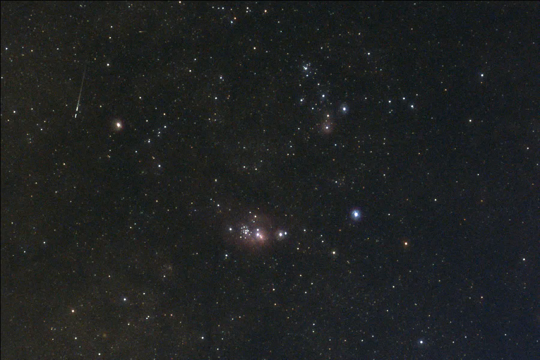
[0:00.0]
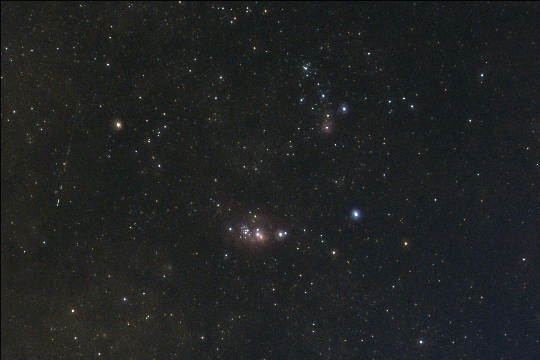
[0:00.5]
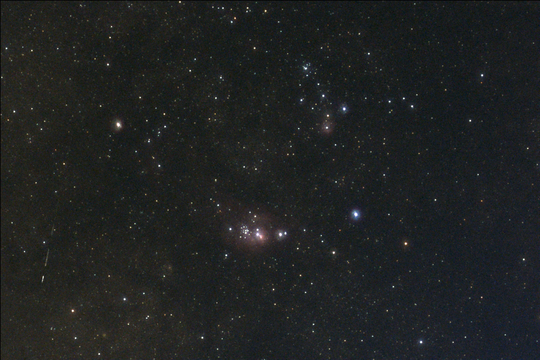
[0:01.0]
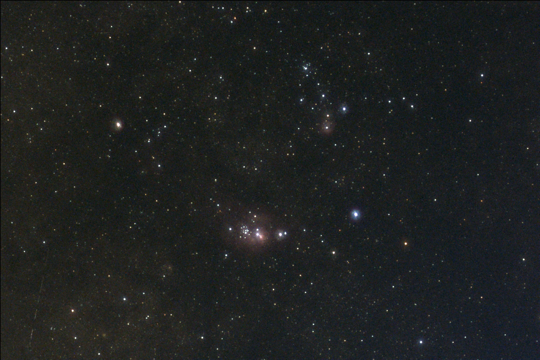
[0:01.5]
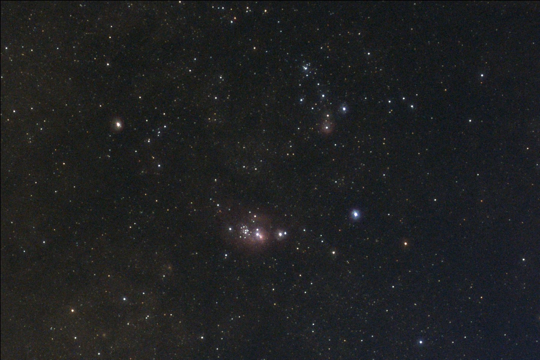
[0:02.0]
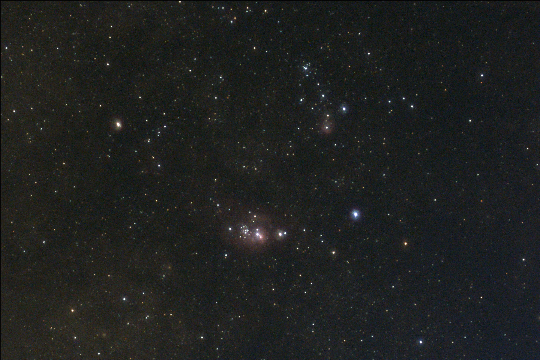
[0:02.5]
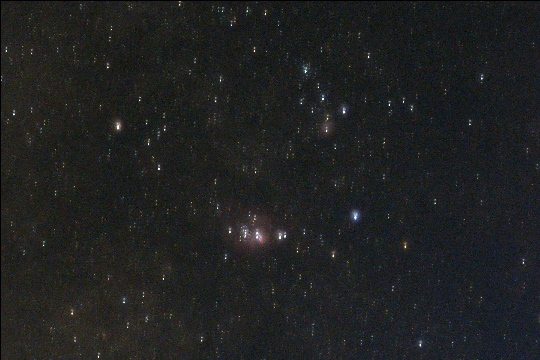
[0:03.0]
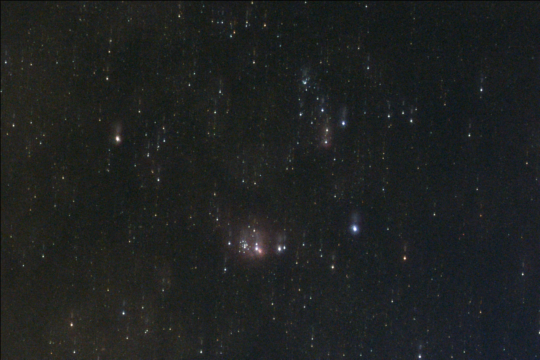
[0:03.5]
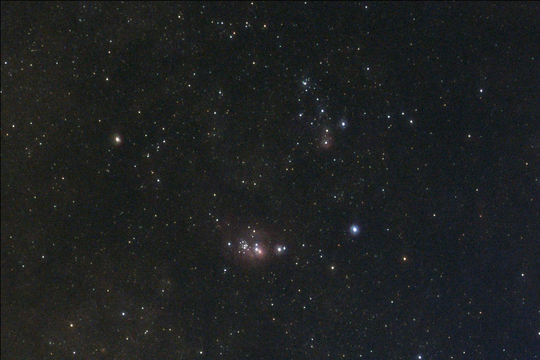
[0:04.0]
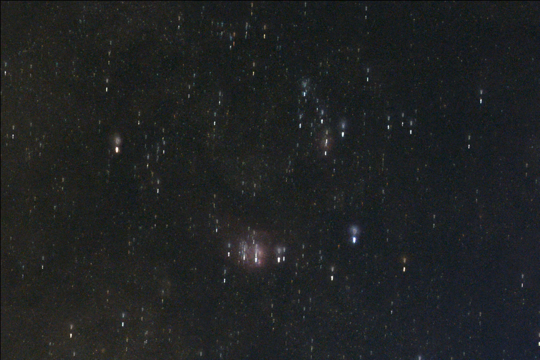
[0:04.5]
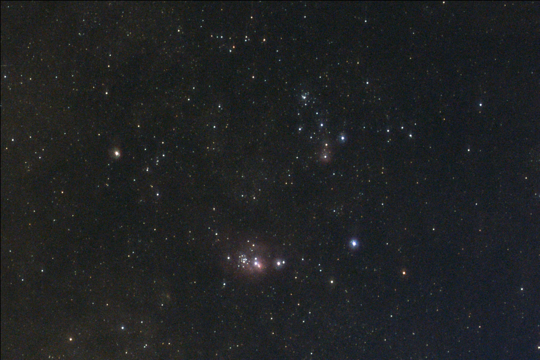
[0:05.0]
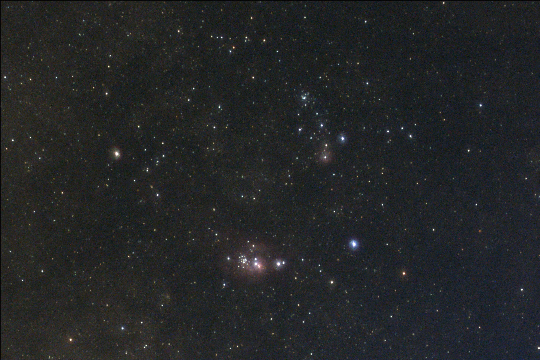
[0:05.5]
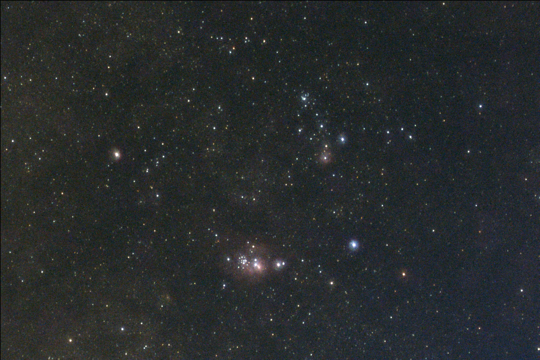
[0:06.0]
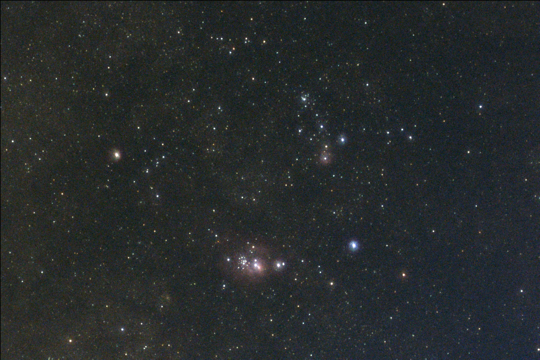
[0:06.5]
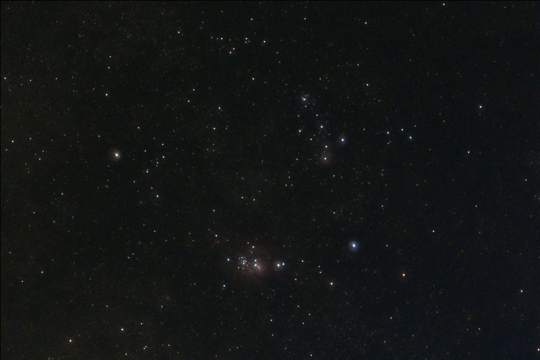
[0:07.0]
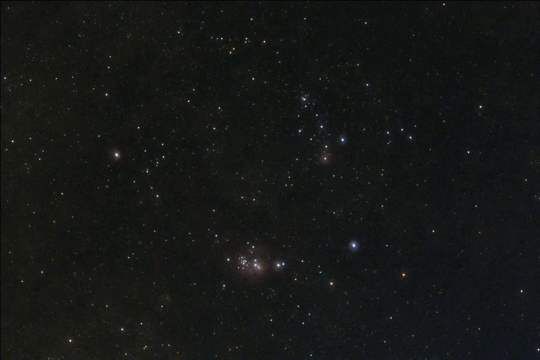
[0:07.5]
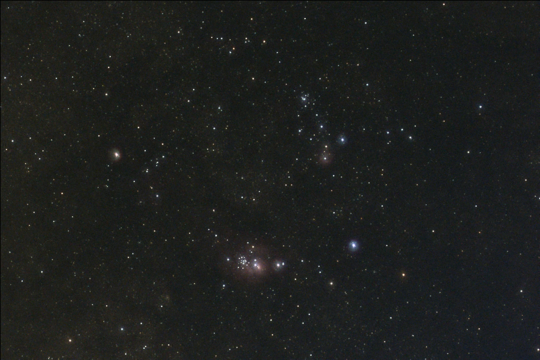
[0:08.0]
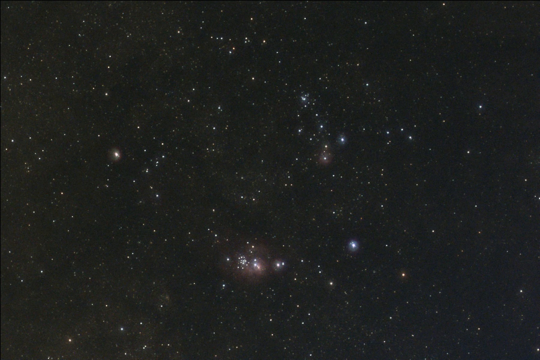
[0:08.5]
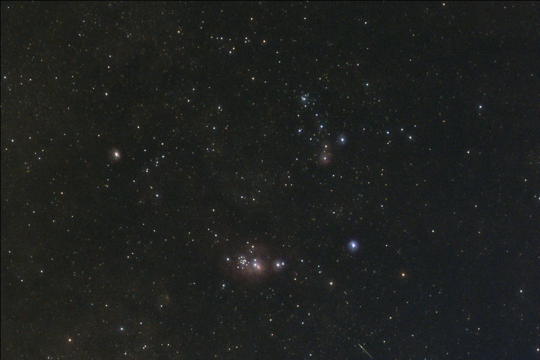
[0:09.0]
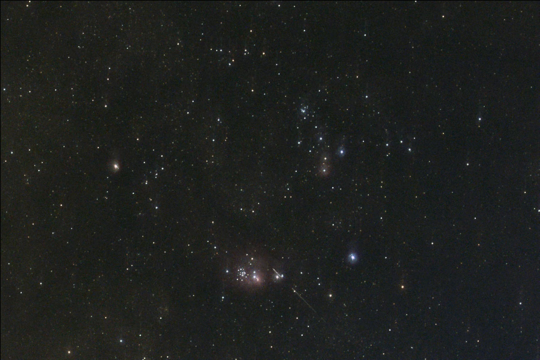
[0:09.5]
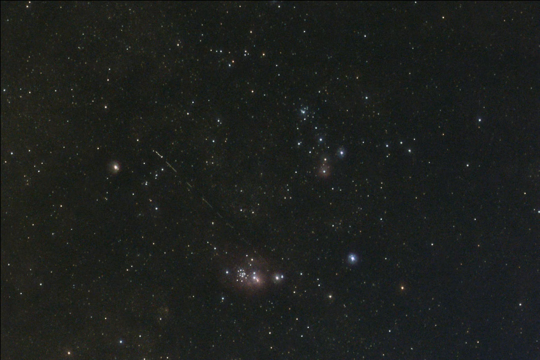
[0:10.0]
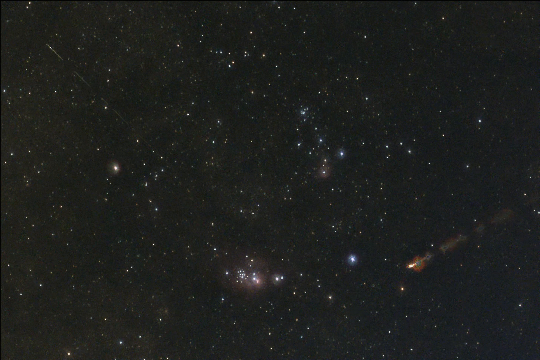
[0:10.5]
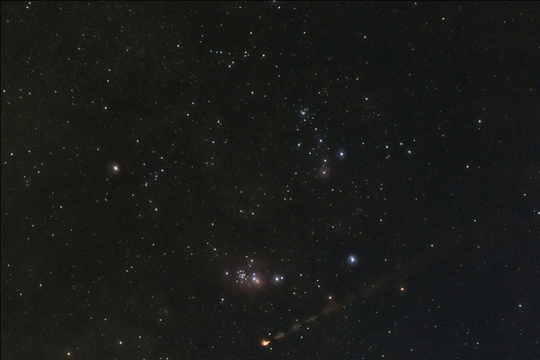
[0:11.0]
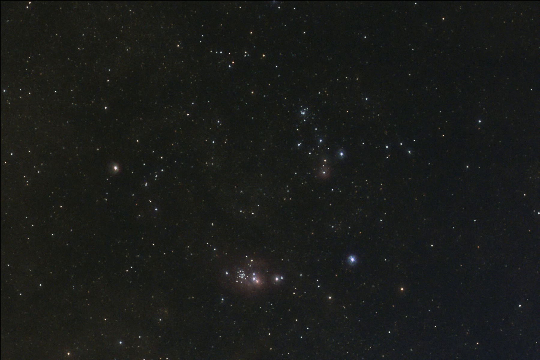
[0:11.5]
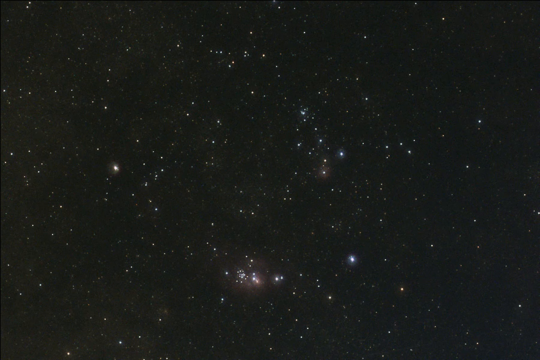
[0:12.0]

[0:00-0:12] The view stares up into a starry sky, with some shooting stars visible. It appears to focus in on a bright cluster of stars. Constellations can be seen, including Orion's belt and at least one of the dippers, probably both. At one point the camera seems to shift to refocus, possibly to look at other constellations. There are some brighter colors among the stars that may be planets or particular well-known stars. The camera view shifts a few times and is a little blurry while it moves. Comets and shooting stars are visible in the sky.